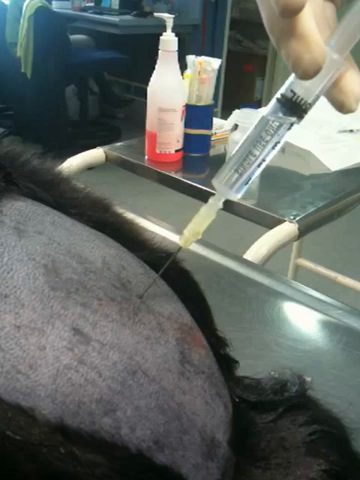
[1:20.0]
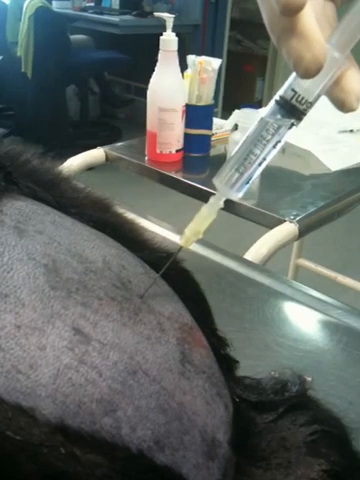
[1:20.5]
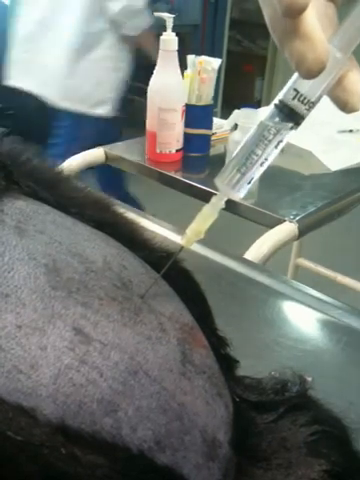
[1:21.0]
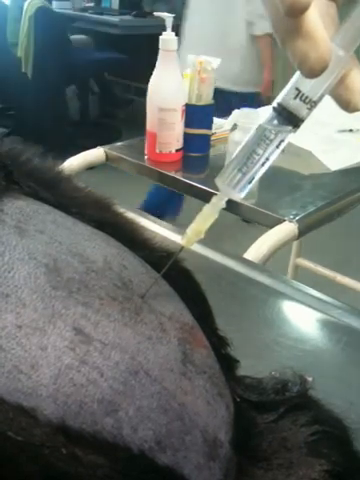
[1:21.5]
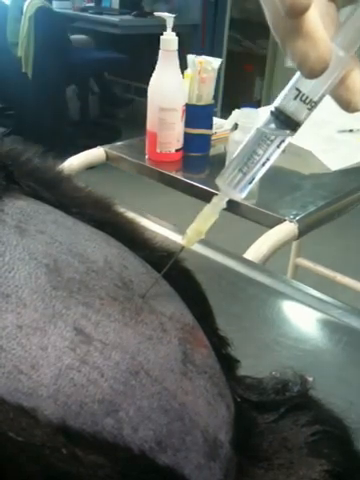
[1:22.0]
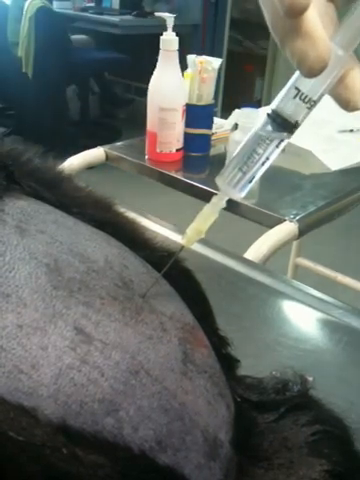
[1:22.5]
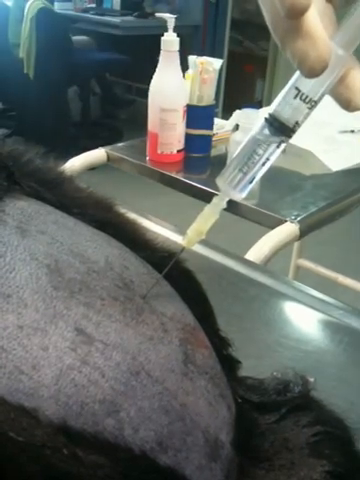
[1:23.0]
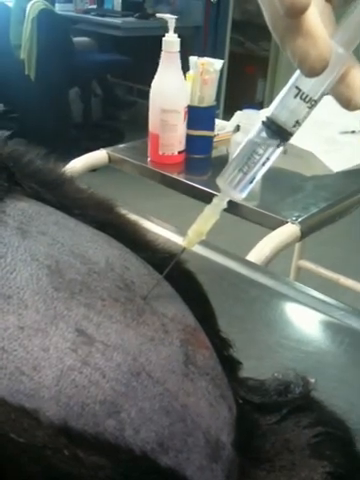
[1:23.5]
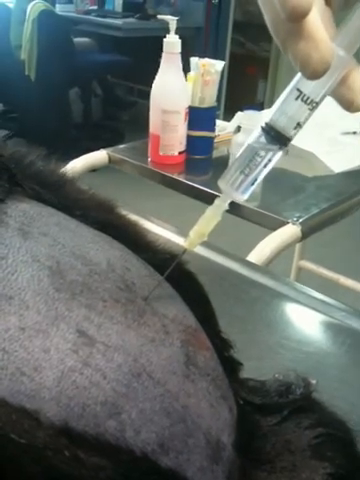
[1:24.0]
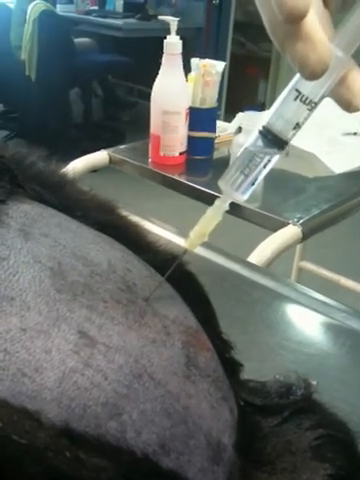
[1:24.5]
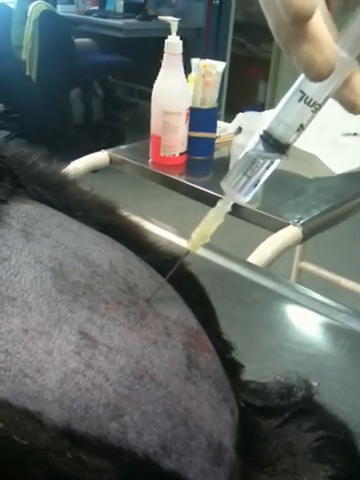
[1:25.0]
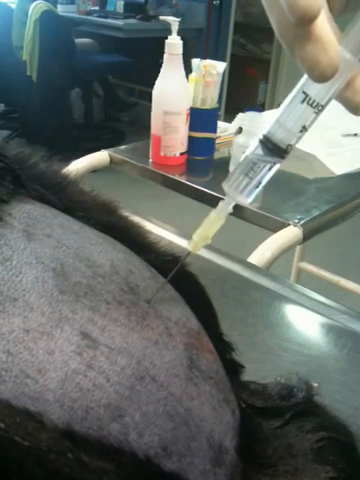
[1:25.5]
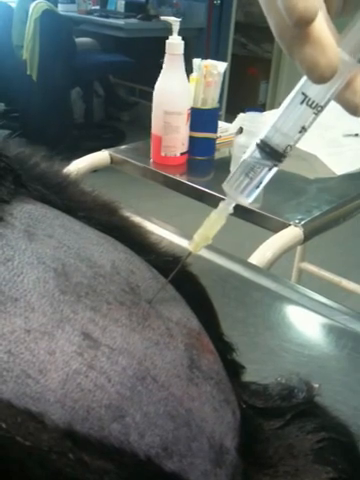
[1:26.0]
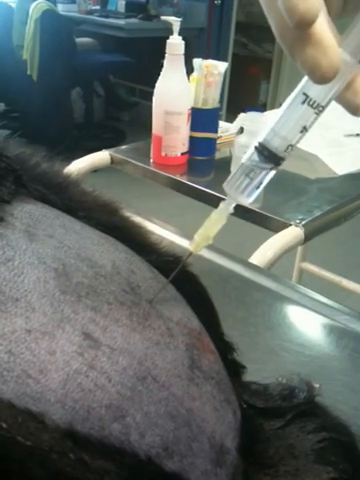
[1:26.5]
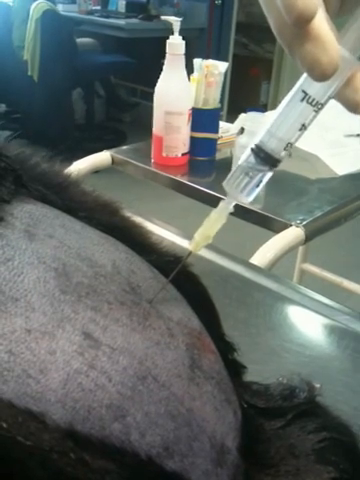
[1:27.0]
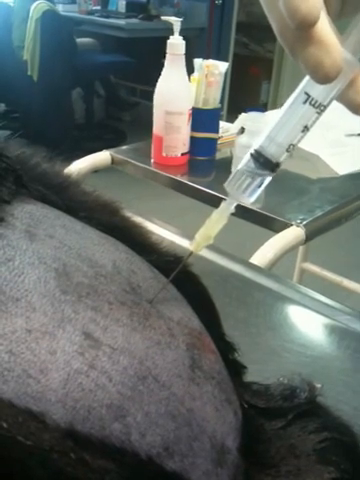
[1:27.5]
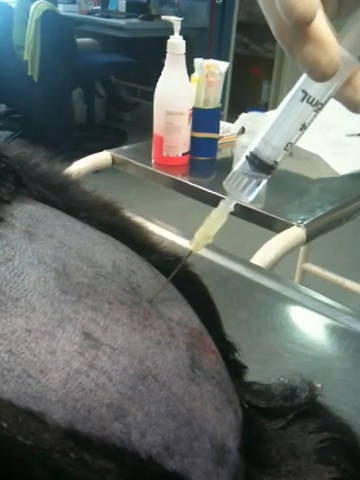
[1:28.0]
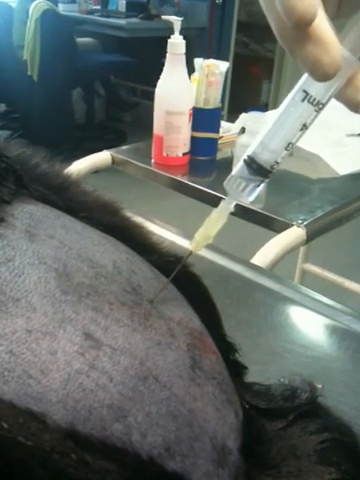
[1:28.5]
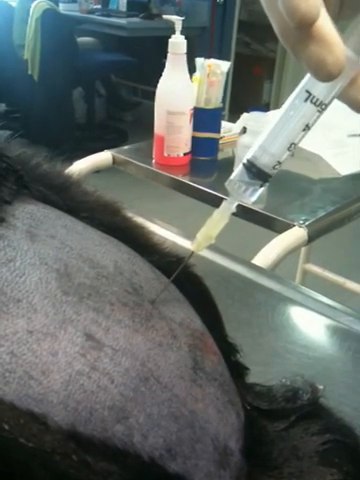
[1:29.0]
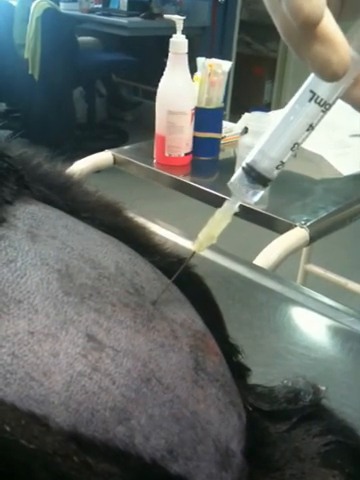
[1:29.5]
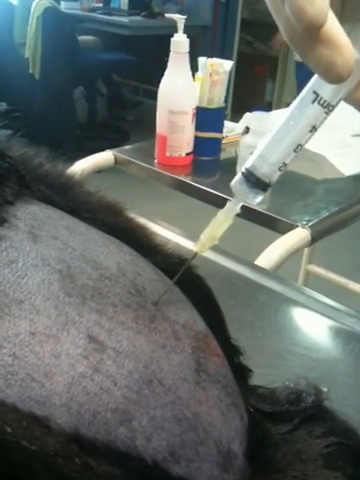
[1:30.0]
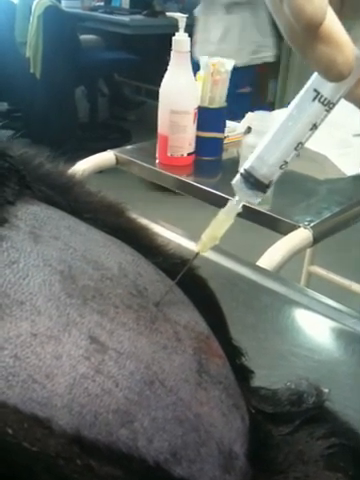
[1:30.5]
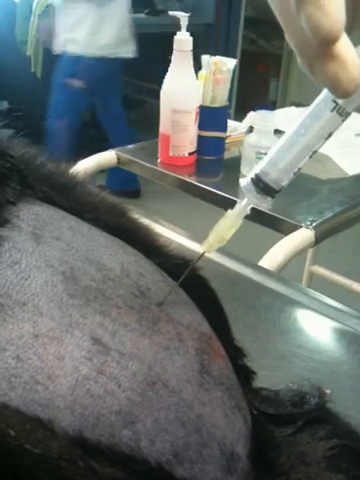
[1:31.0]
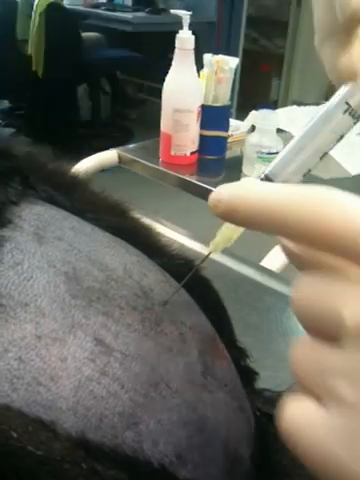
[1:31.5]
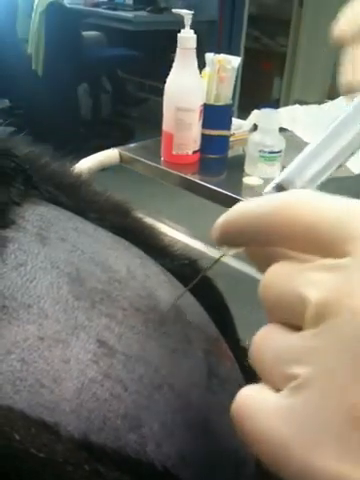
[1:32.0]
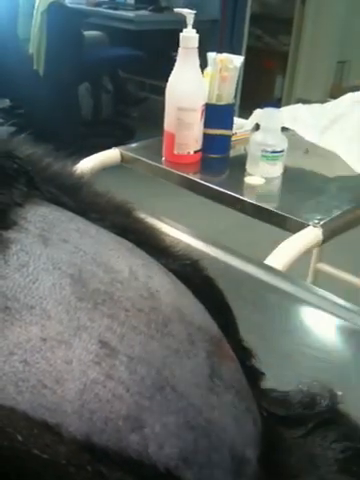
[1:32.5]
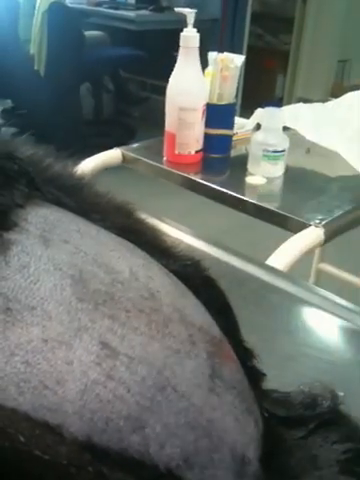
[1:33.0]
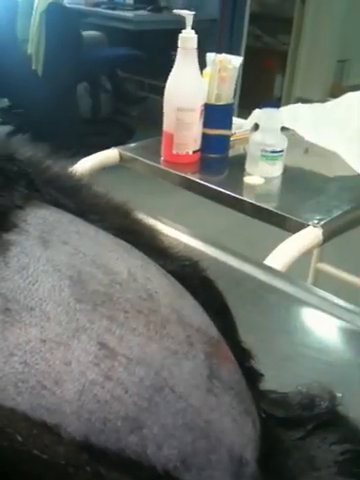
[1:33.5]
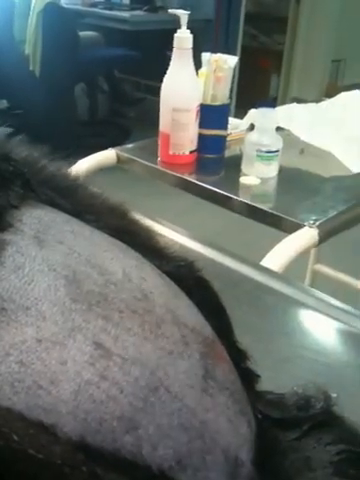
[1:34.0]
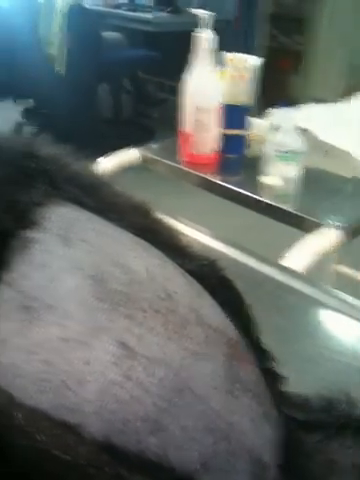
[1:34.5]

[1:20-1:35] The needle or tube is still deeply inserted into the black dog's rump, with the connecting plastic top on the tube and the syringe placed into it. The vet plunges down the syringe plunger, and the liquid gradually goes down through the tube. In the background, a veterinary assistant in blue trousers and a white top walks around. The syringe is slowly depressed until all the liquid has gone into the metal tube. The assistant walks back into the room, and the vet carefully takes the long needle or tube out of the dog's rump as the video ends.